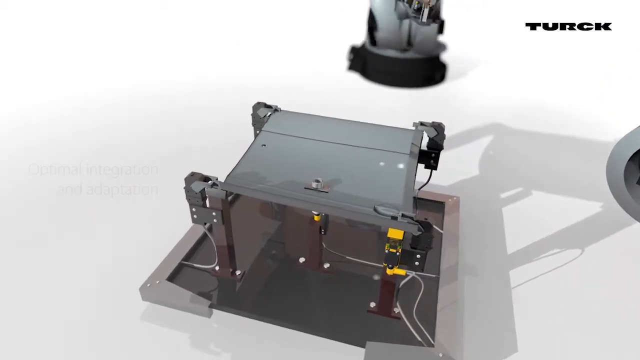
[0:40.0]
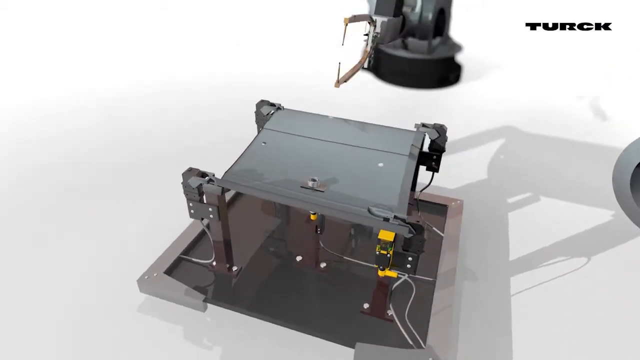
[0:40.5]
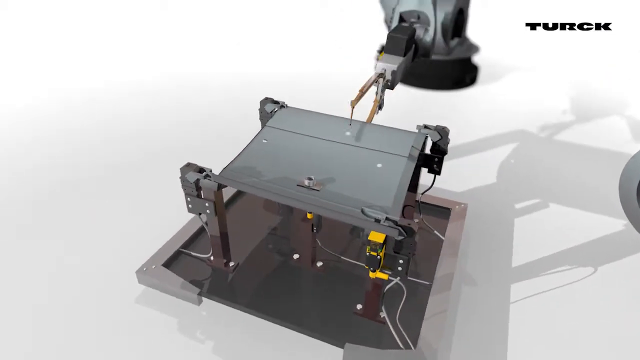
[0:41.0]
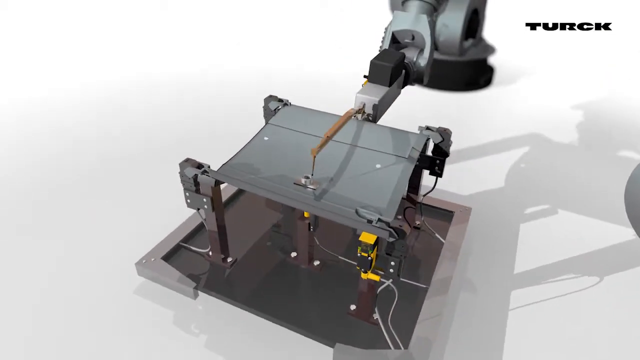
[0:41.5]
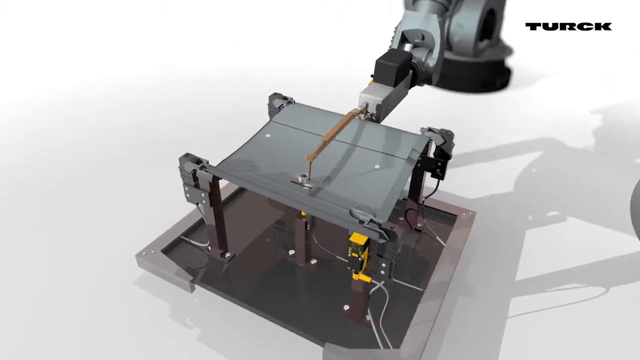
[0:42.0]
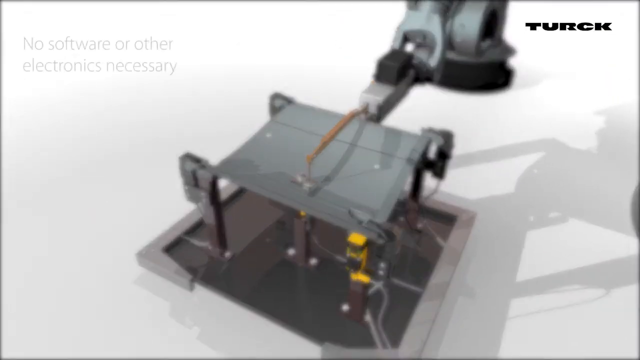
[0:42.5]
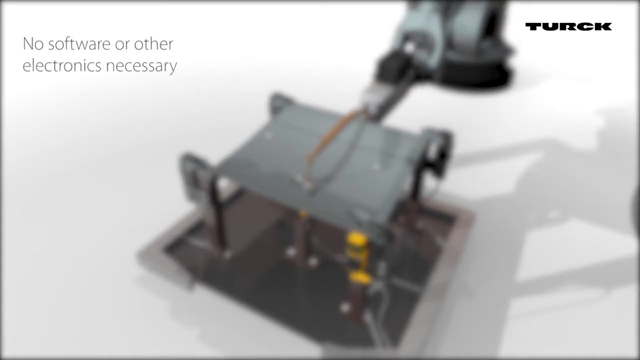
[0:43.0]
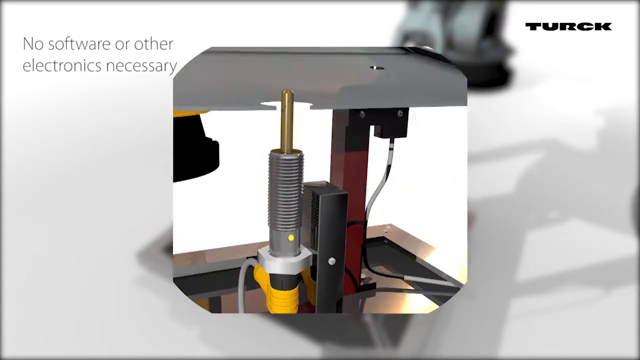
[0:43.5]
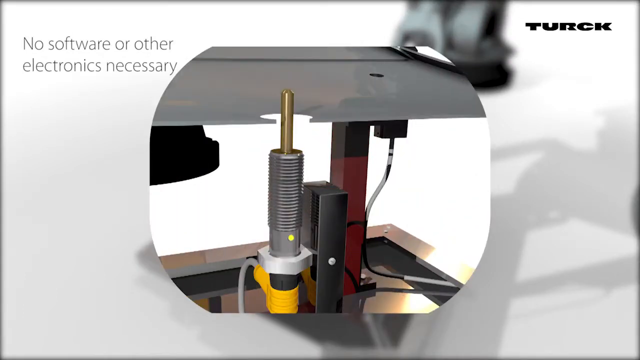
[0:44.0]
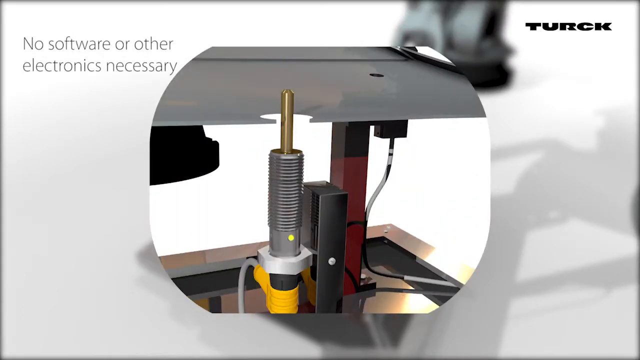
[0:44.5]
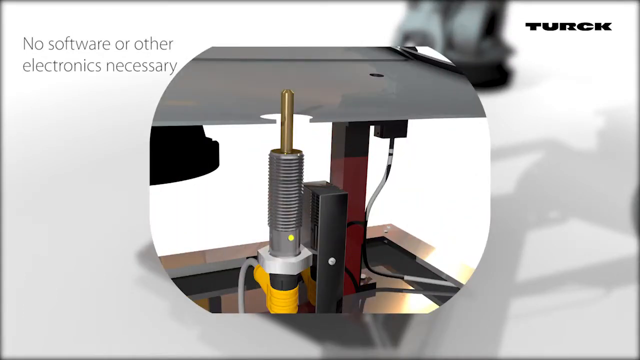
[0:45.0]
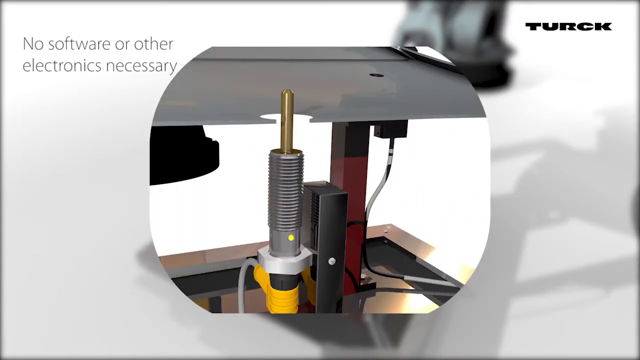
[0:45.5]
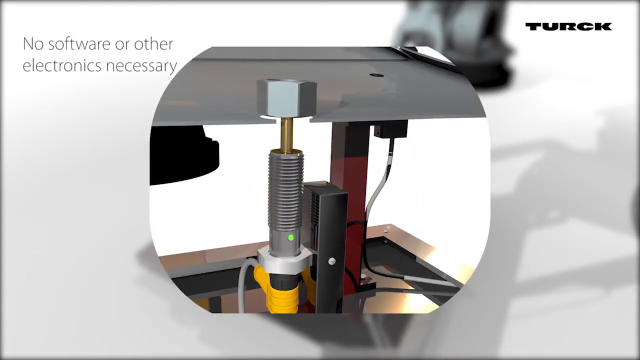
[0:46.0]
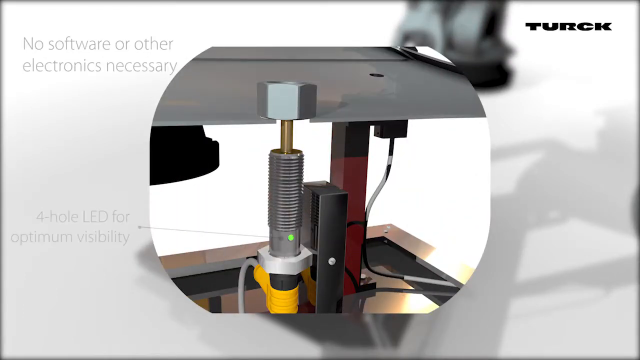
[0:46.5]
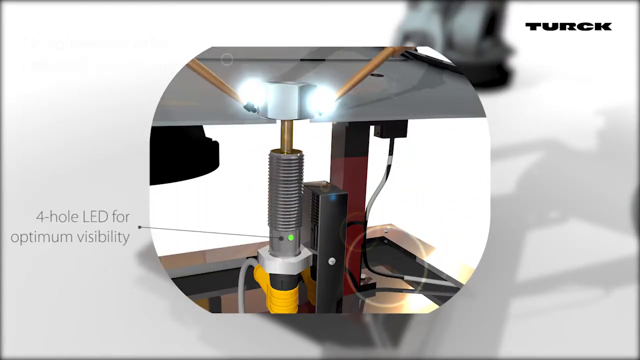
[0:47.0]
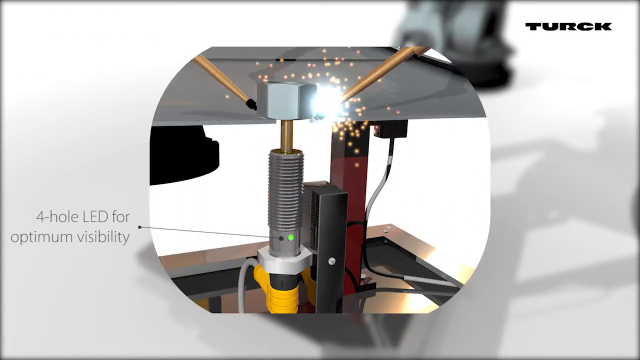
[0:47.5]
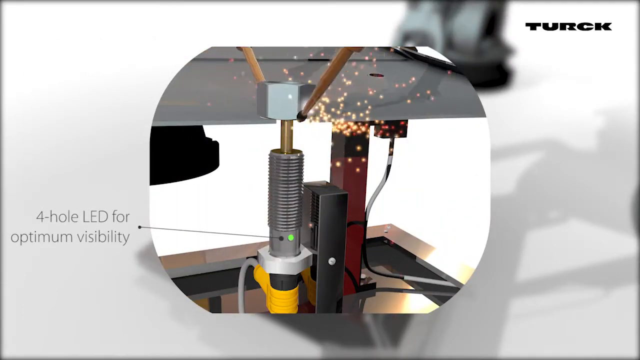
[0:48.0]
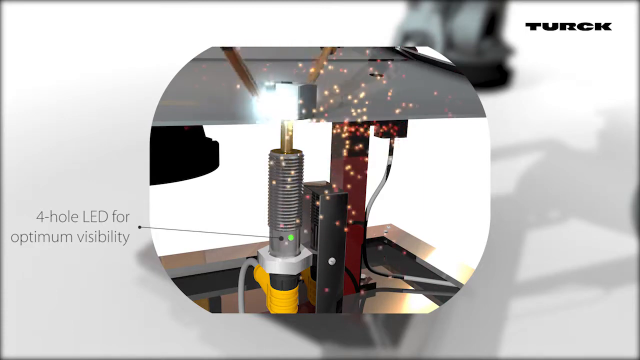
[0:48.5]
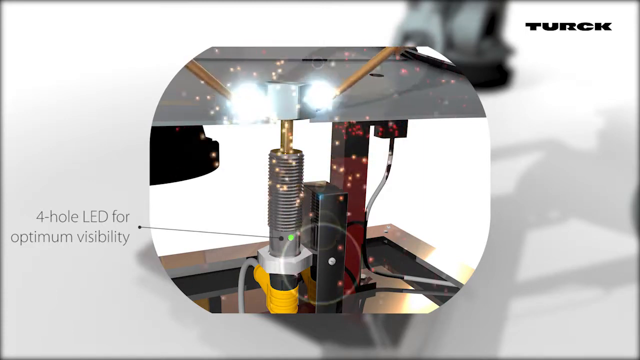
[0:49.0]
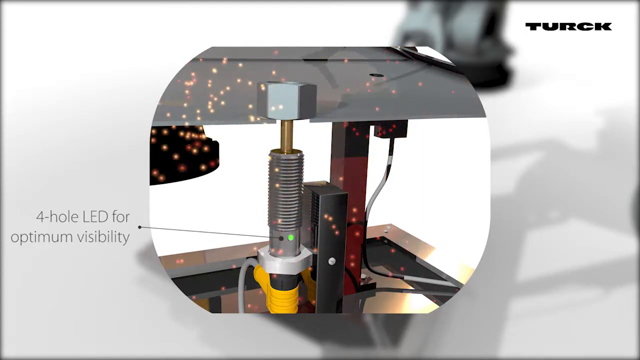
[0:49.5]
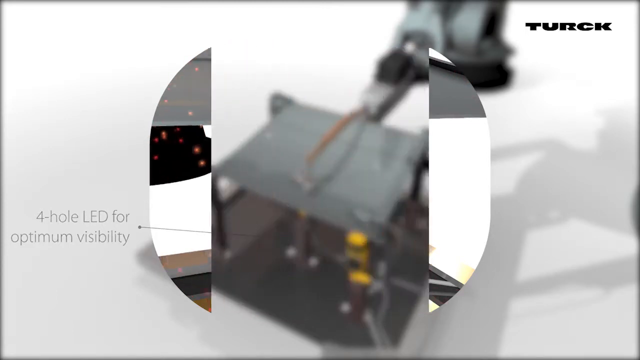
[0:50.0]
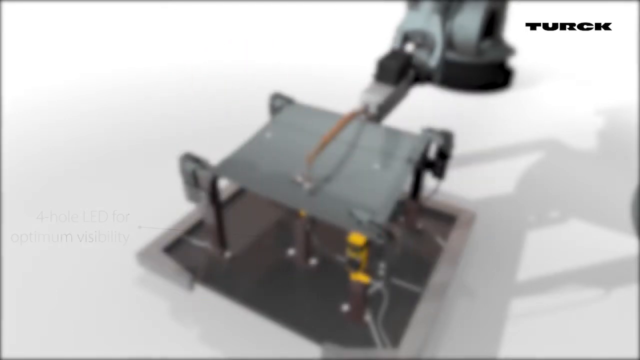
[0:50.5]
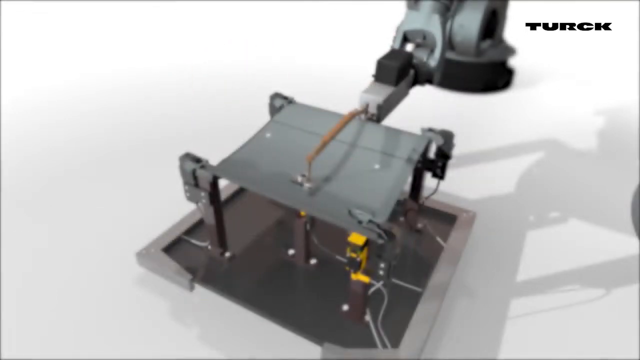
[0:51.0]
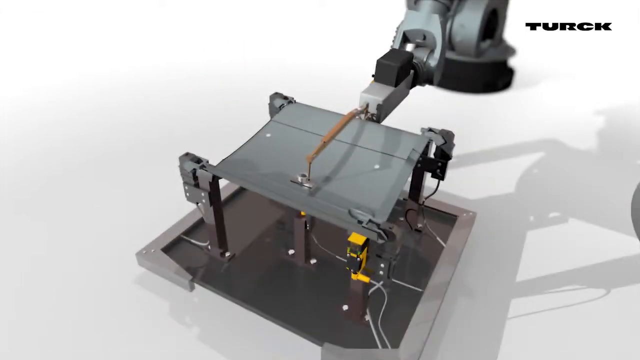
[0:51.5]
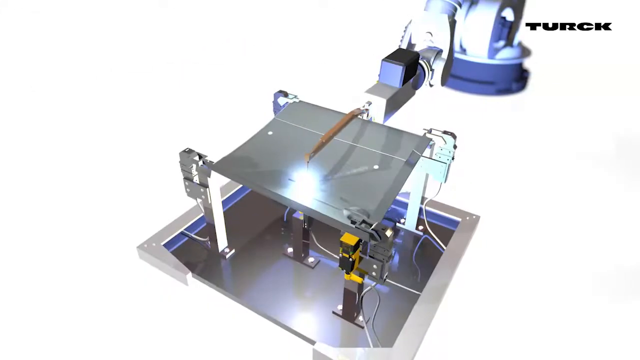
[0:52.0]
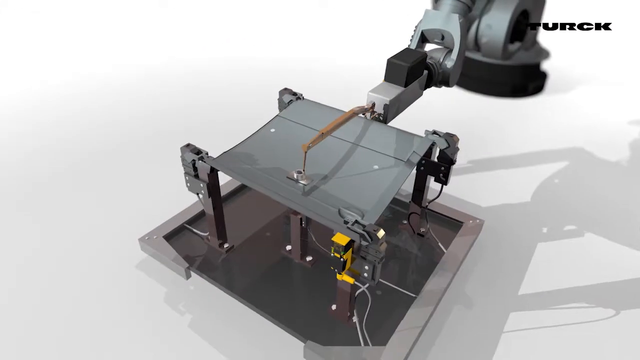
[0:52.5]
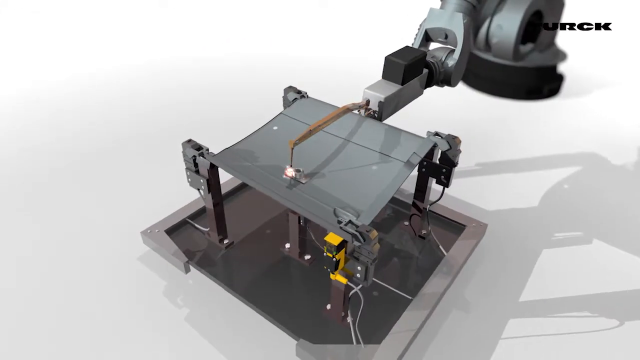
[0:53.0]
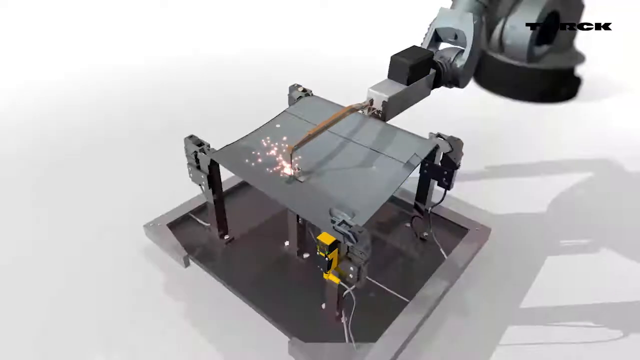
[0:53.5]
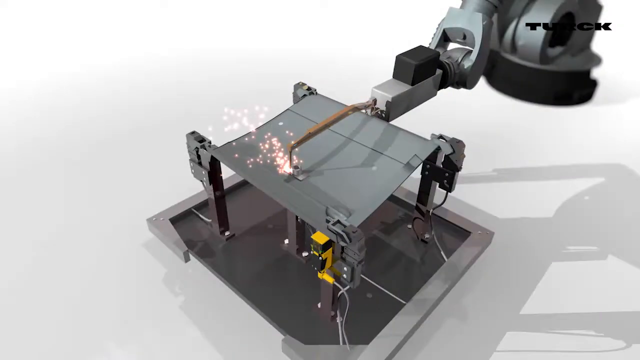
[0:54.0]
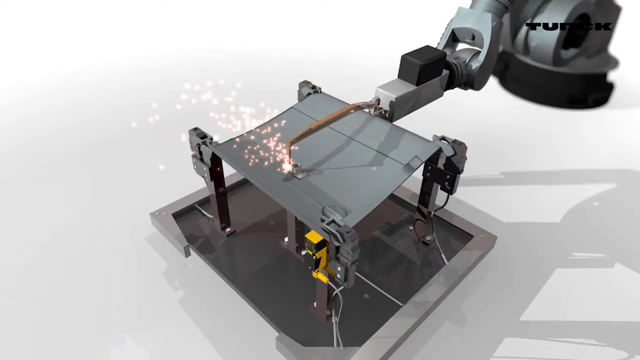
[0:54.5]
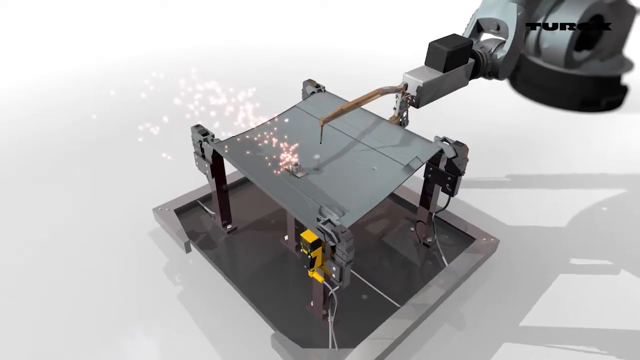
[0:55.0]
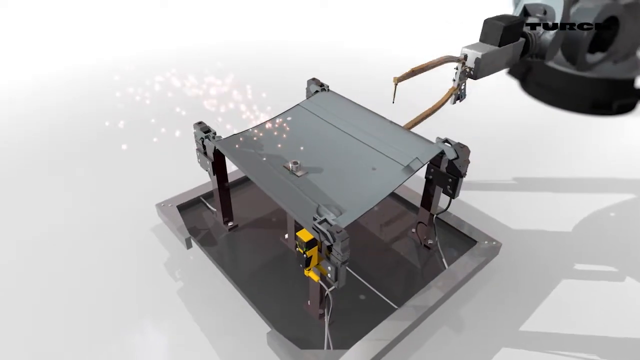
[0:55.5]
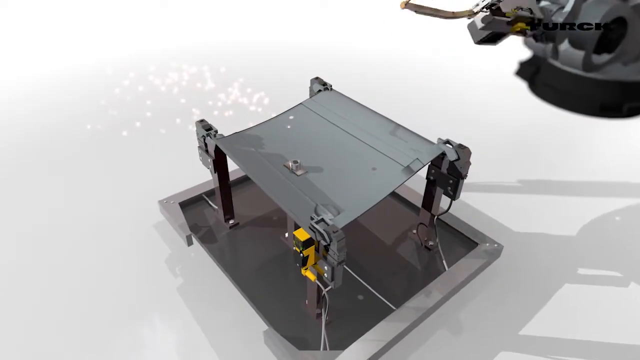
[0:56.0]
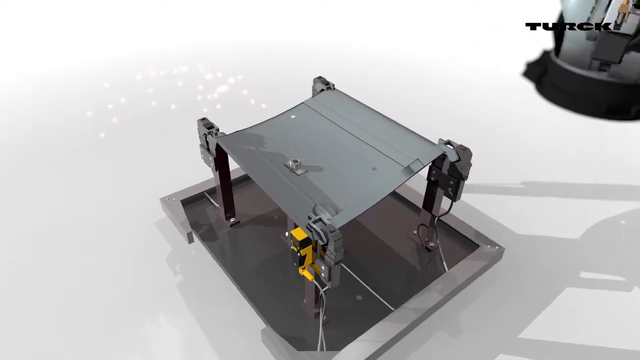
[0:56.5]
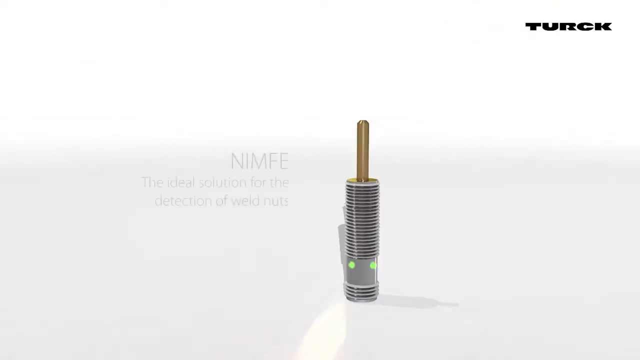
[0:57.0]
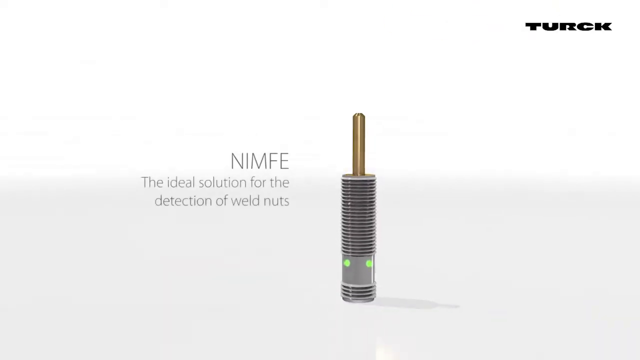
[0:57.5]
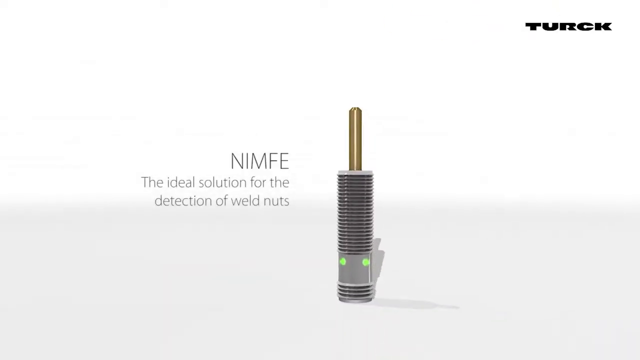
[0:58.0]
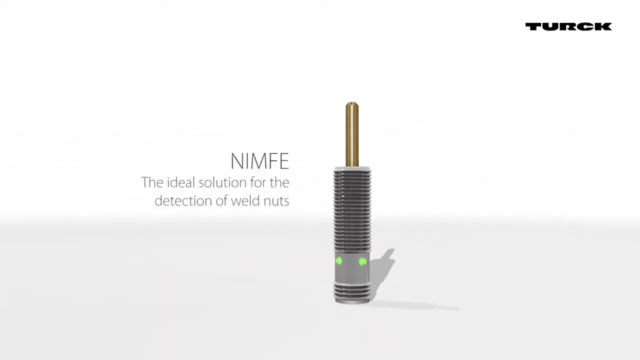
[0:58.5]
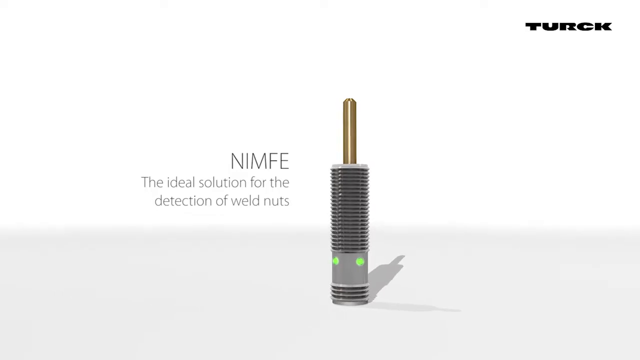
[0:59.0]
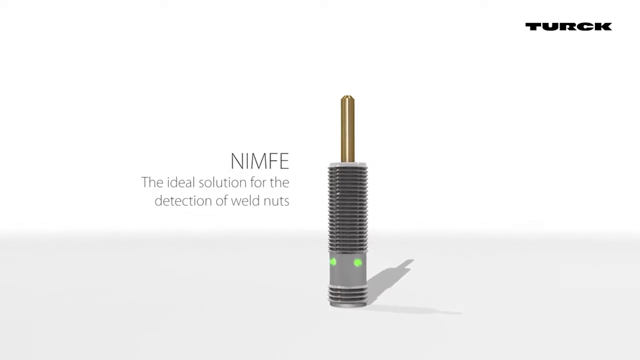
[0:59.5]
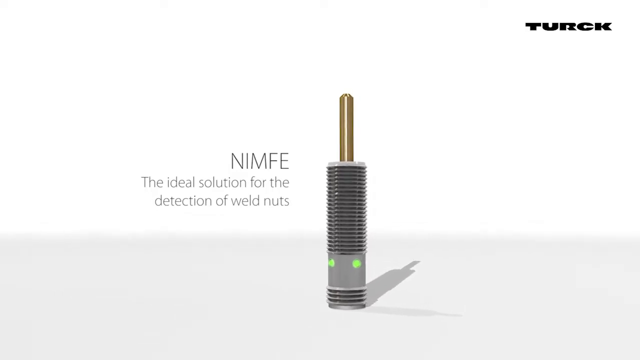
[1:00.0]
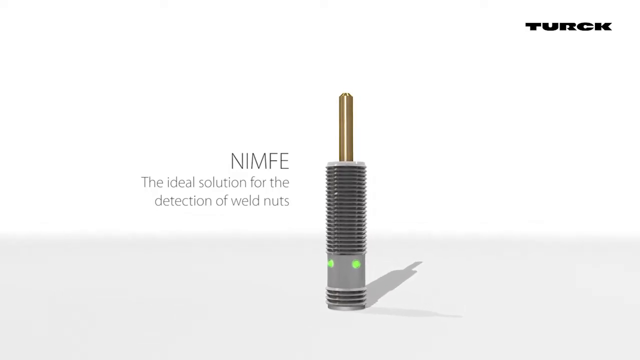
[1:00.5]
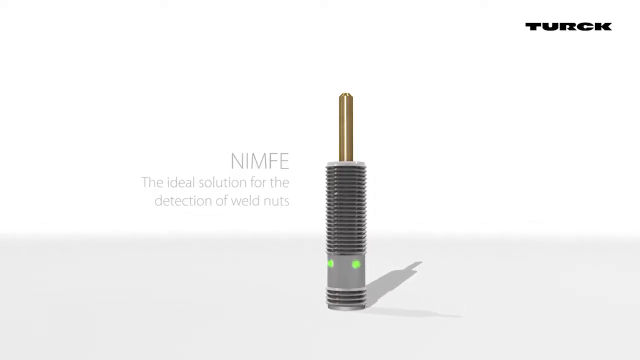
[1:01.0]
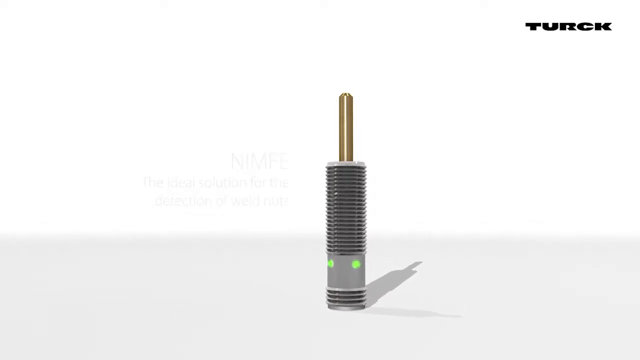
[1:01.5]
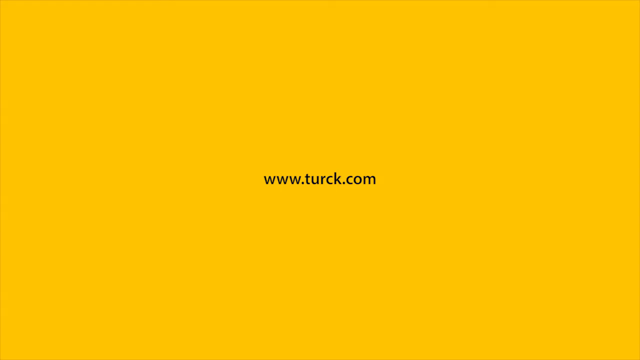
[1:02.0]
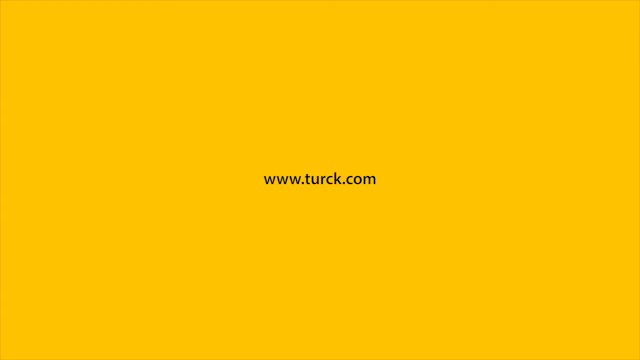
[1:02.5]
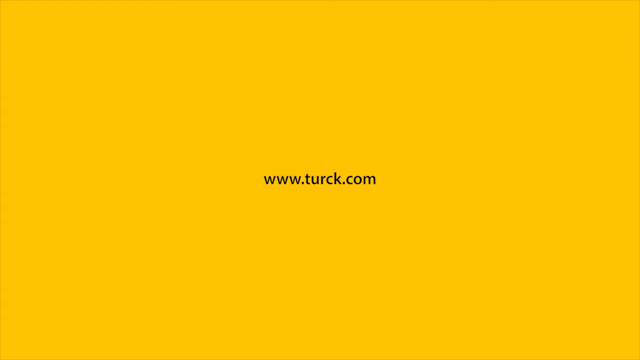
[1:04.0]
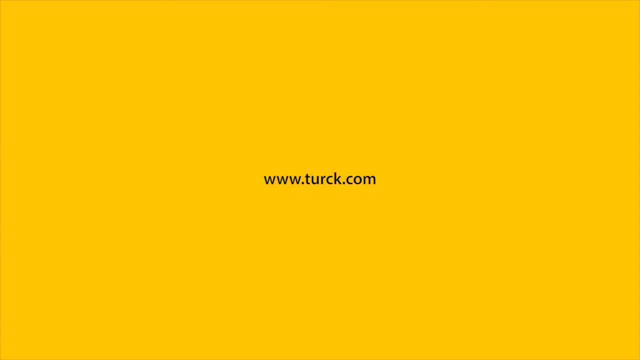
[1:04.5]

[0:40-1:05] The text "no software or other electronics necessary" appears. After the panel is placed on the sensor base, a nut is put on the sensor, and the robot welds around the sensor so that it can be properly fitted to the plate. The robot places the plate on the sensor platform gently, a screw is placed on it, and a robot with a welding device welds the sensor to the plate with the help of the screw, showing how a sensor is built and placed in a car in an automobile facility.